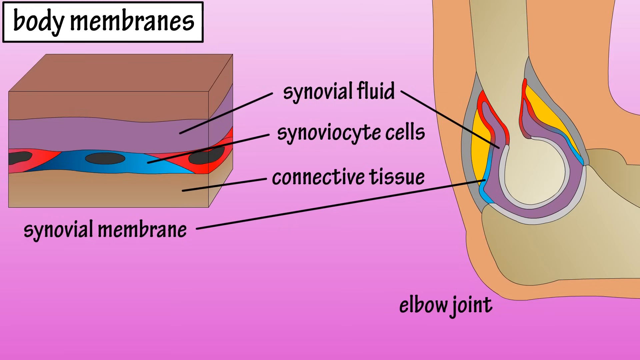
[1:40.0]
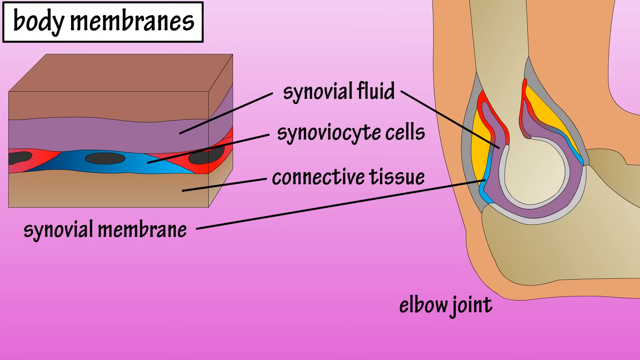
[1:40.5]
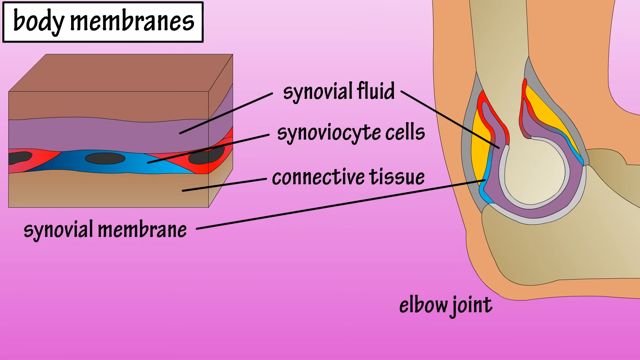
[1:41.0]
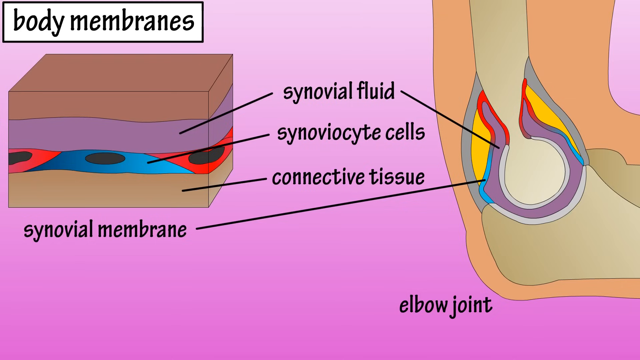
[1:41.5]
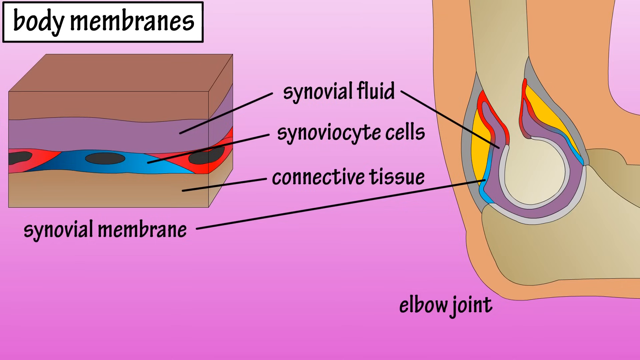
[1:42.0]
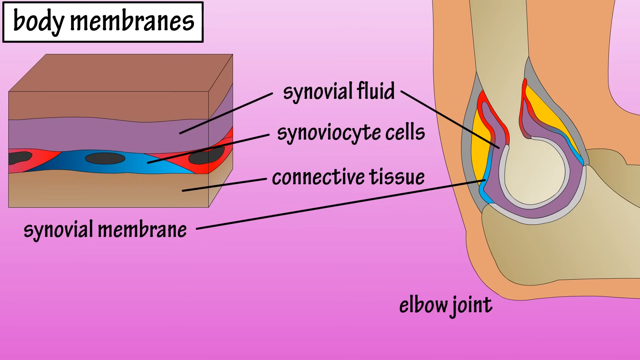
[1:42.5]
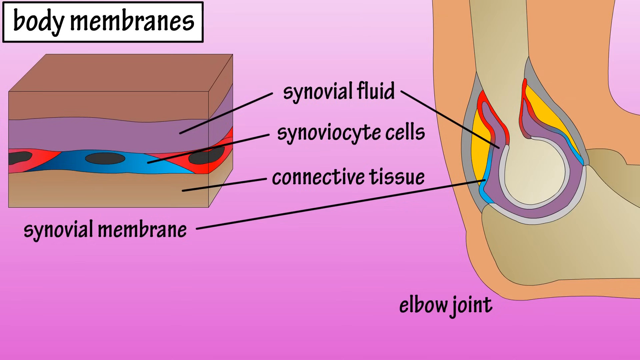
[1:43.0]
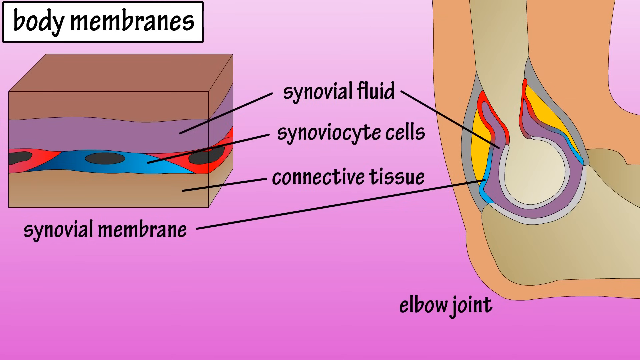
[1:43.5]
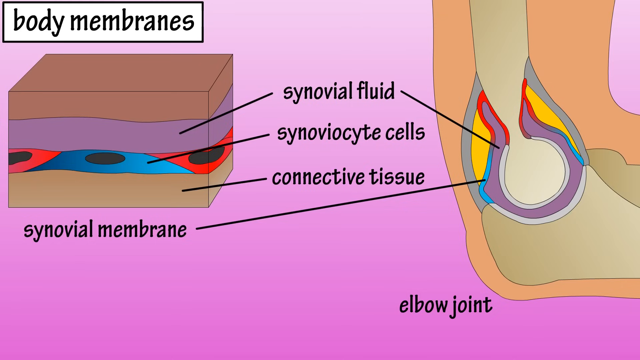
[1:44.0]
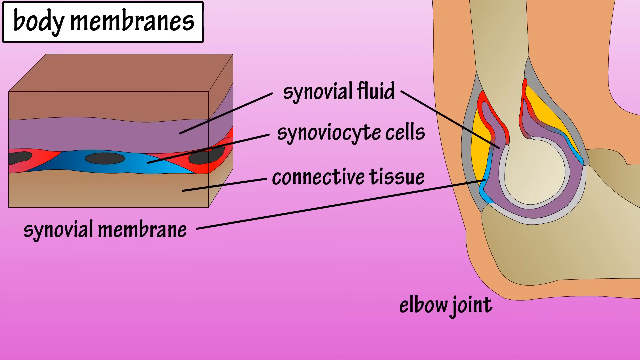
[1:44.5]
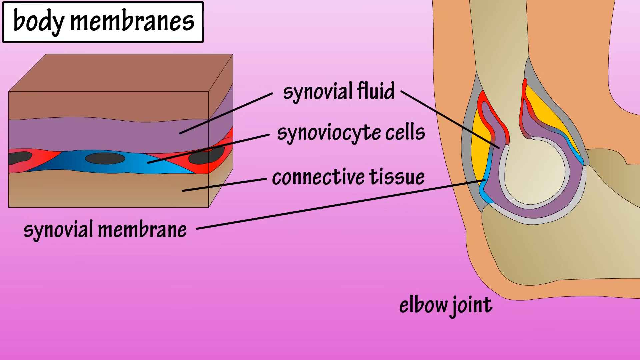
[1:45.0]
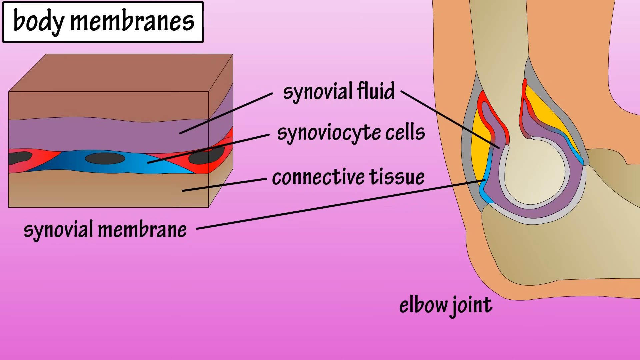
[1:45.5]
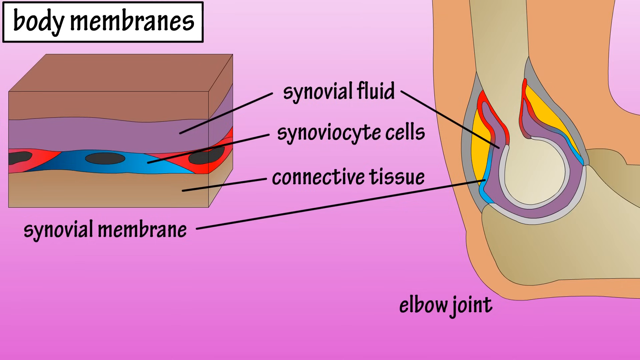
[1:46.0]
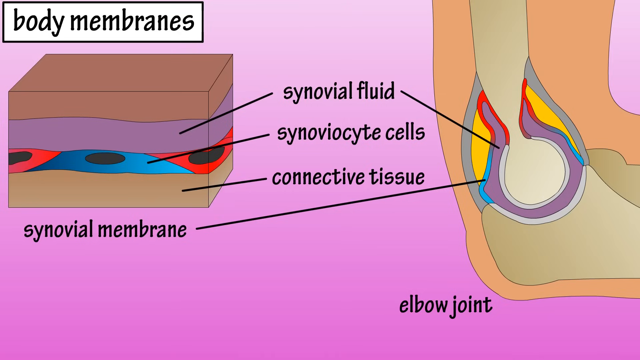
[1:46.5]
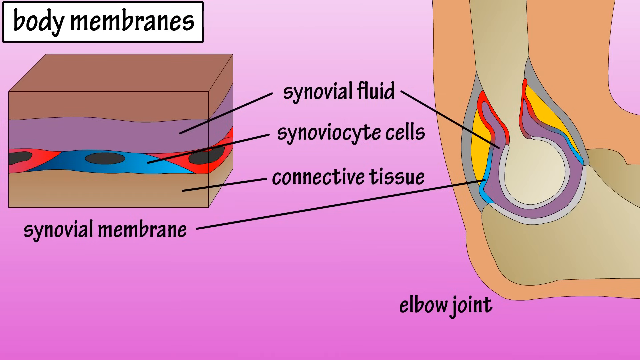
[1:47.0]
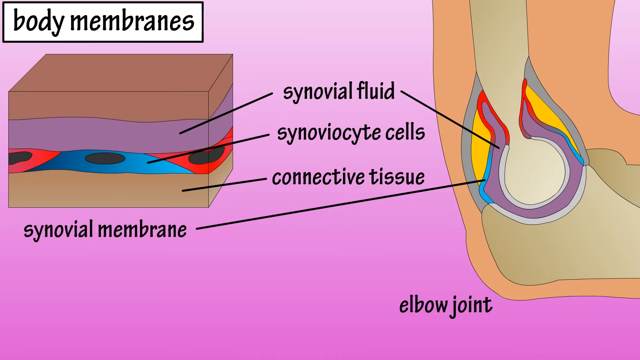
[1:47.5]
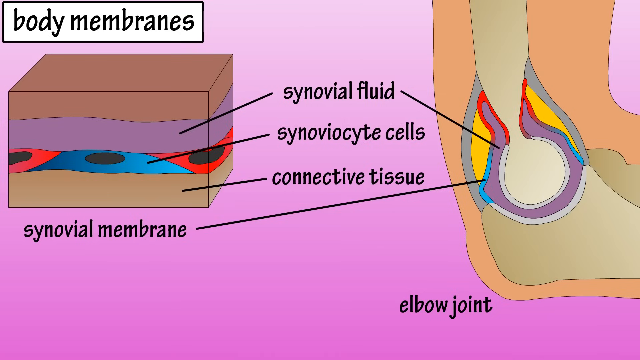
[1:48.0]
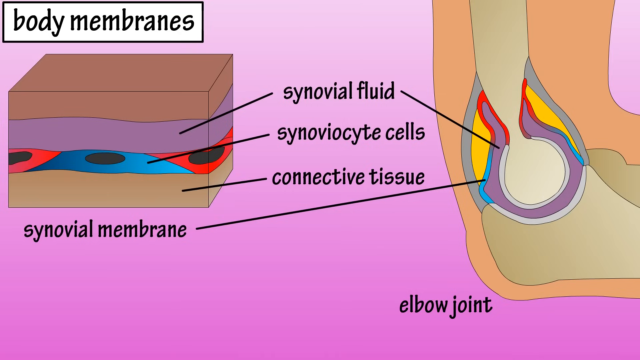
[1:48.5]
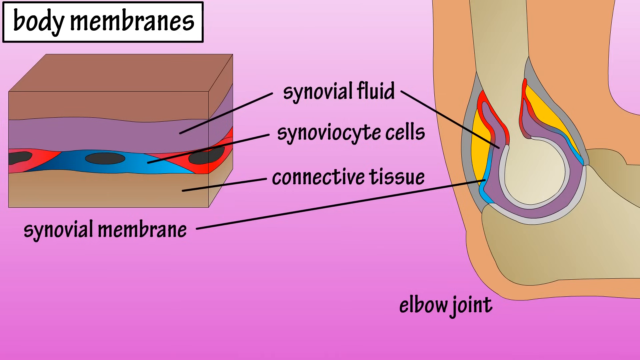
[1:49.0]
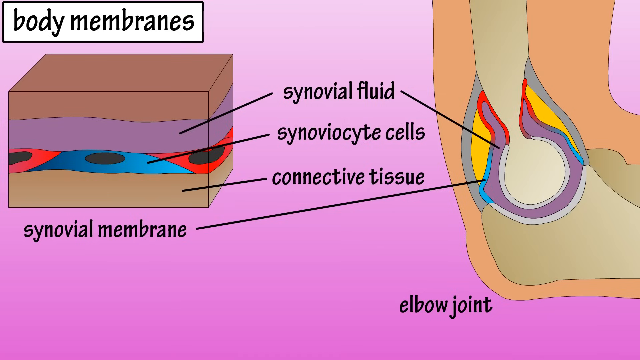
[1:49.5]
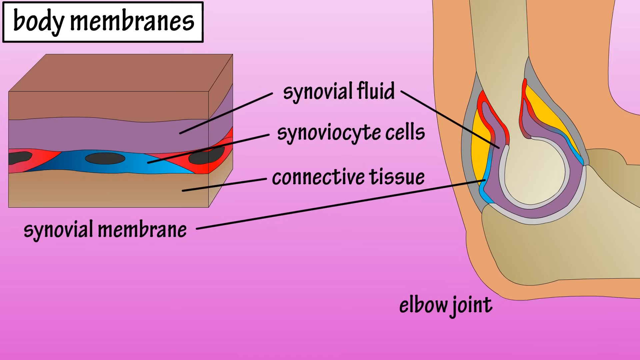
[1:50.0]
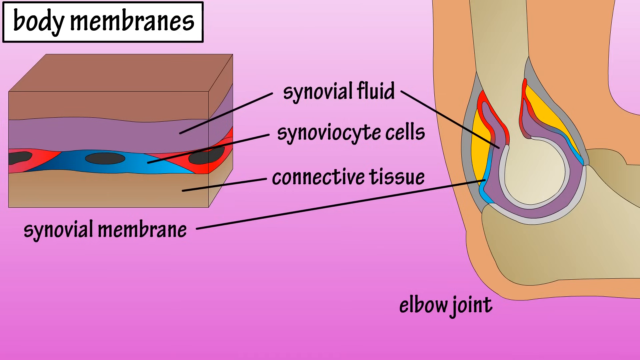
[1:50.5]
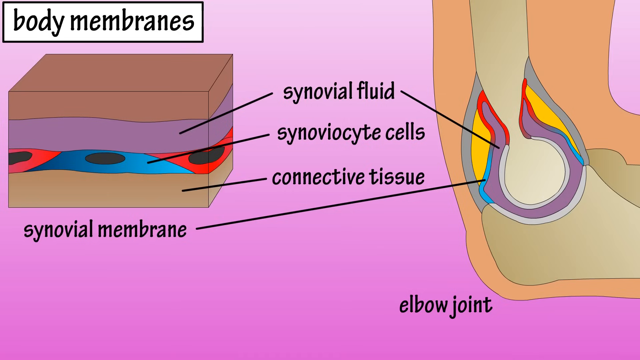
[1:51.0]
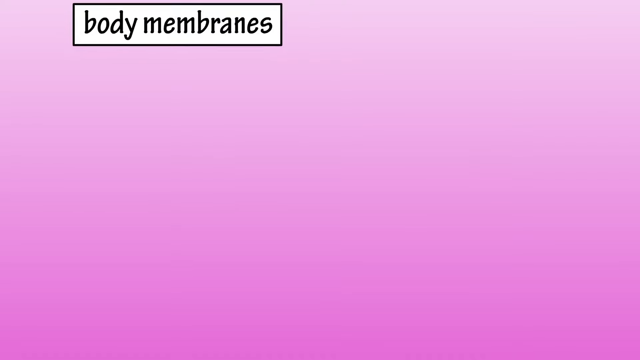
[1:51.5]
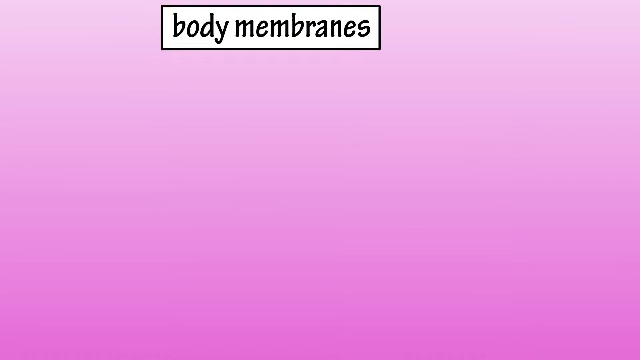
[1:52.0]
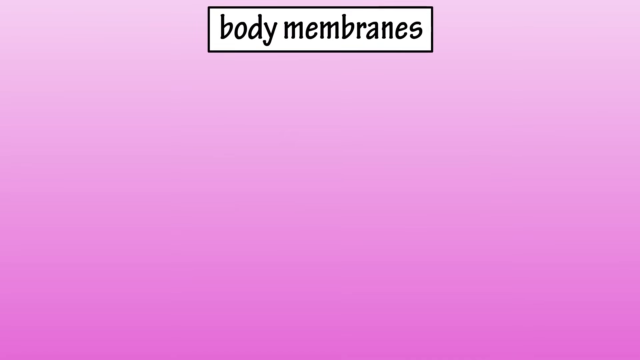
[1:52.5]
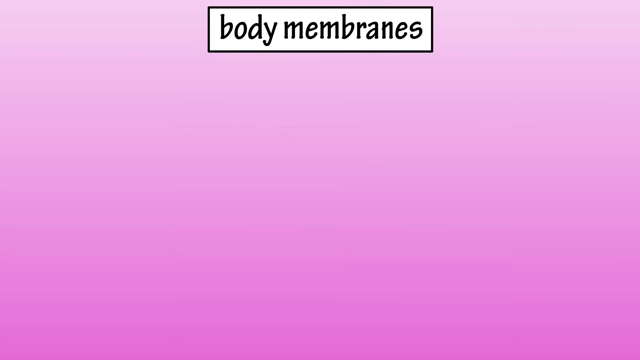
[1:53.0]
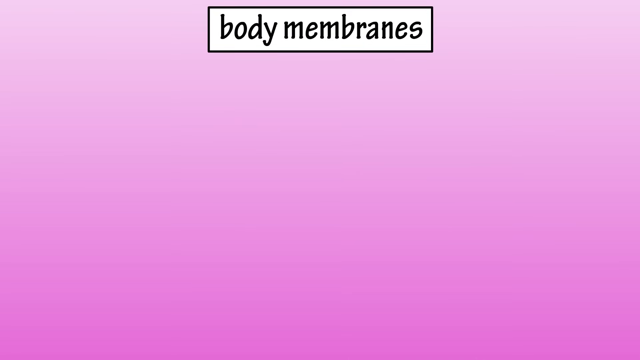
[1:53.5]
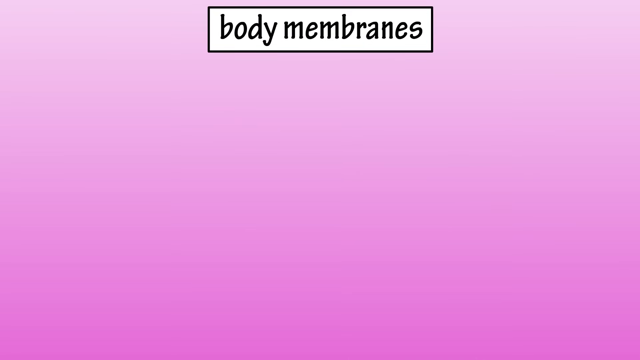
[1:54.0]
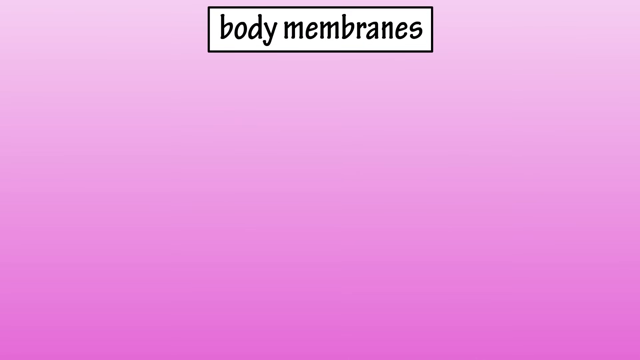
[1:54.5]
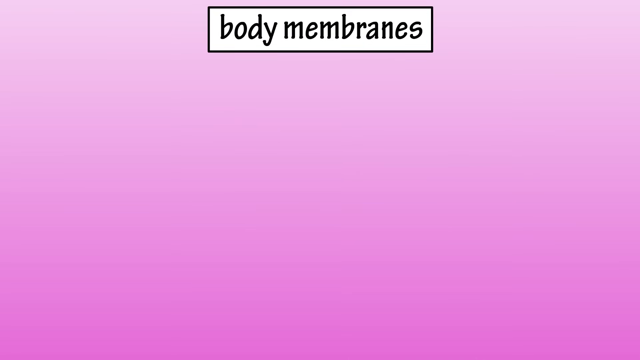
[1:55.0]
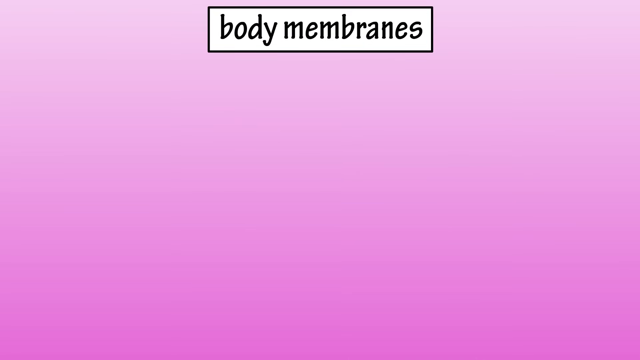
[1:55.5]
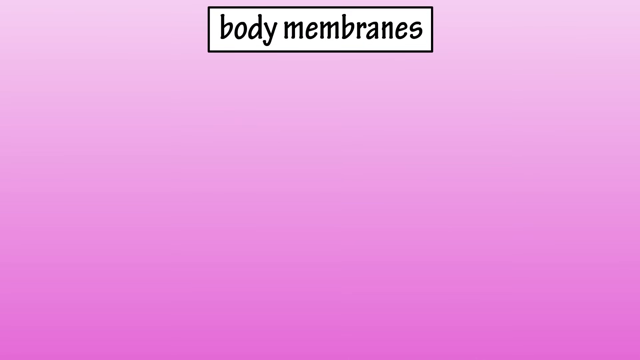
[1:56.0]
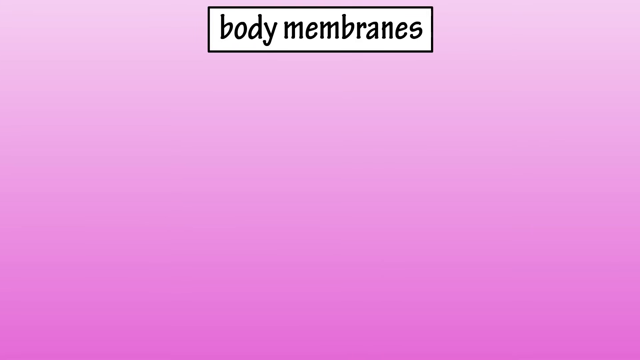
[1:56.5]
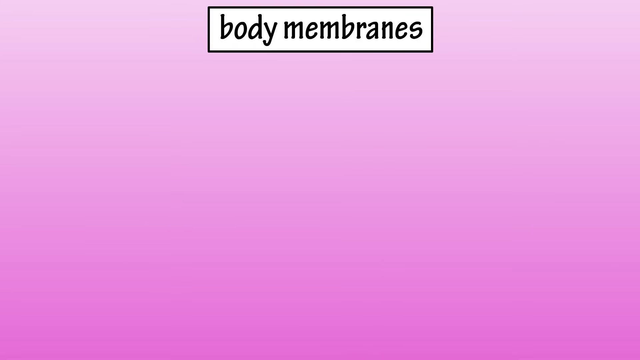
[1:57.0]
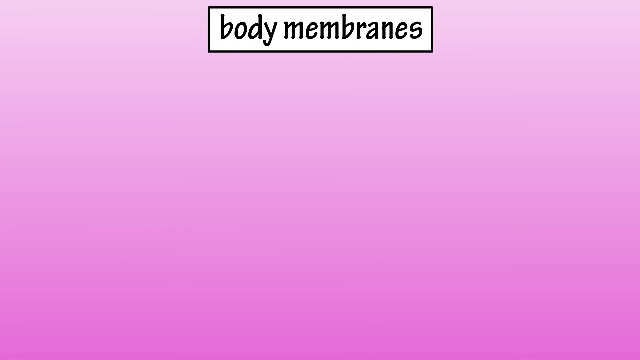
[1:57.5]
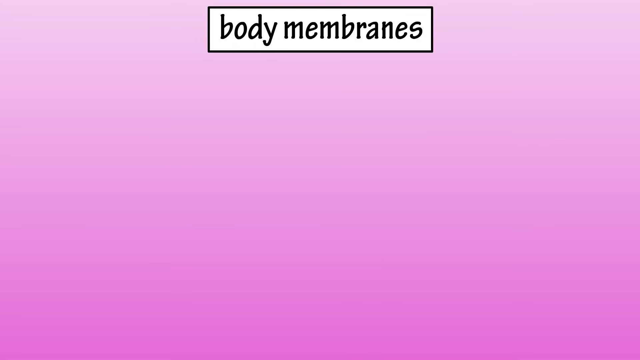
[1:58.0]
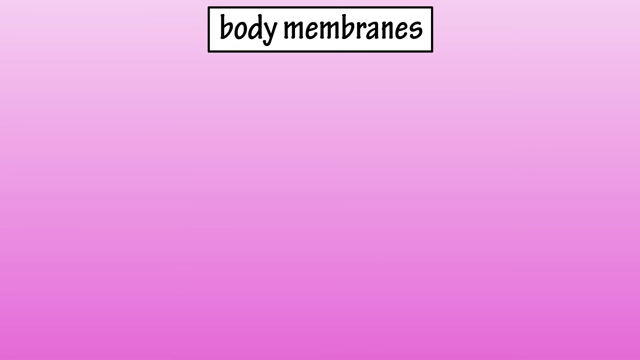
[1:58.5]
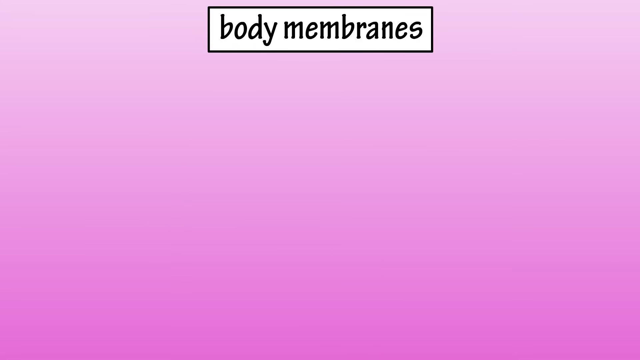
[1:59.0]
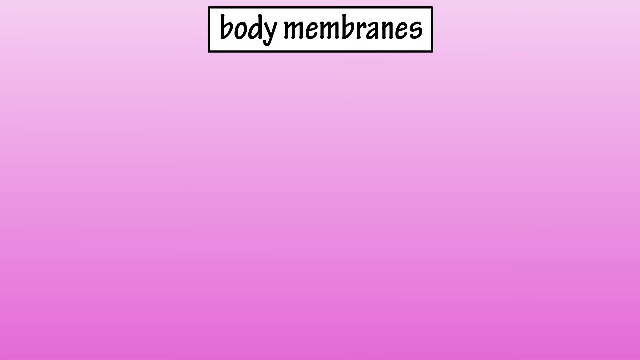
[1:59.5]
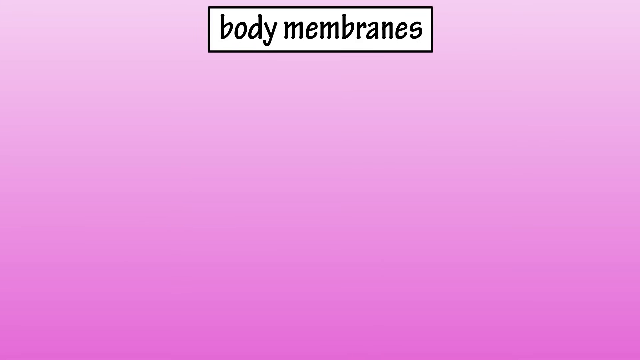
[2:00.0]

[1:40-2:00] The text and images of the synovial membrane screen disappear completely, leaving only the pink and white gradient background and the white rectangular text box in the top left corner. The text box slides along the top border of the screen to the top center, where it stops. The video then stays static: the gradient background runs from light pink at the top to dark pink at the bottom, and the white rectangular text box with a black border sits in the top center, its black text reading "body membranes" in all lowercase letters. No additional text or images appear, and the video ends.